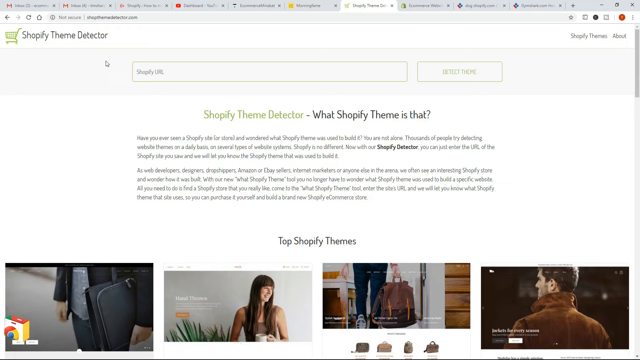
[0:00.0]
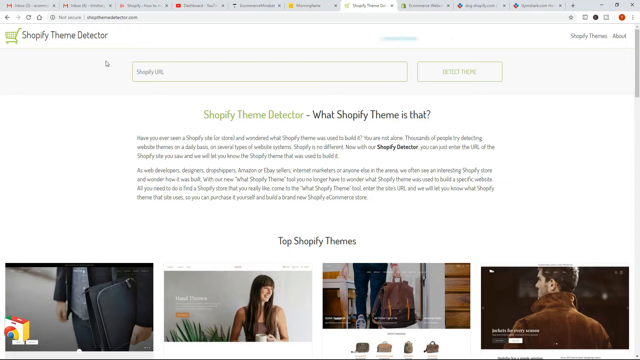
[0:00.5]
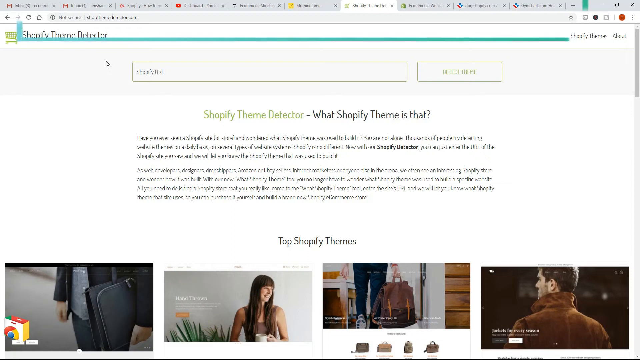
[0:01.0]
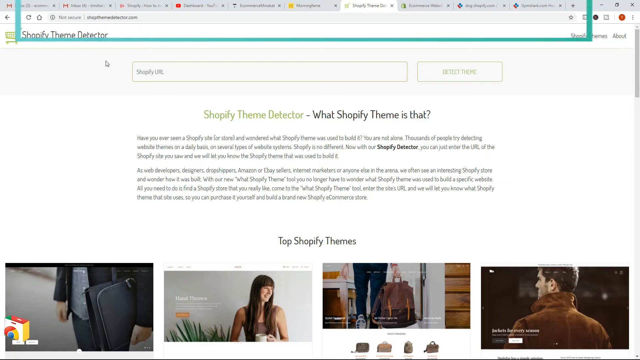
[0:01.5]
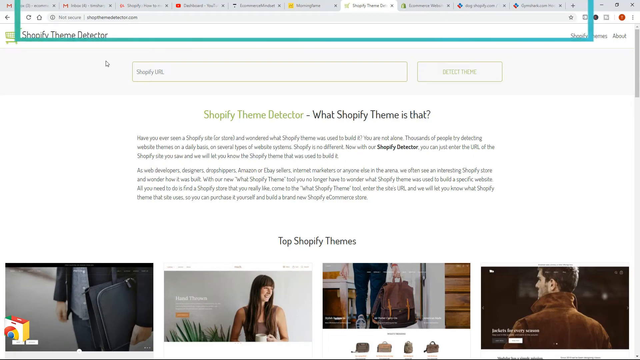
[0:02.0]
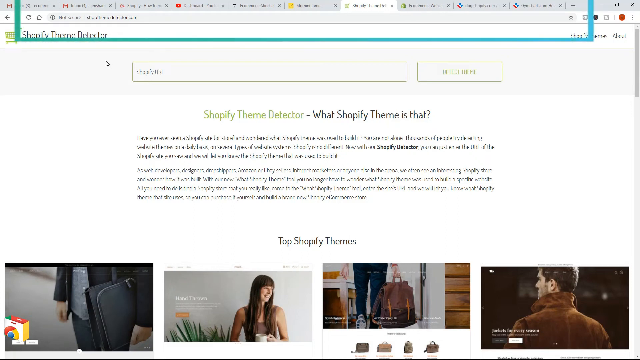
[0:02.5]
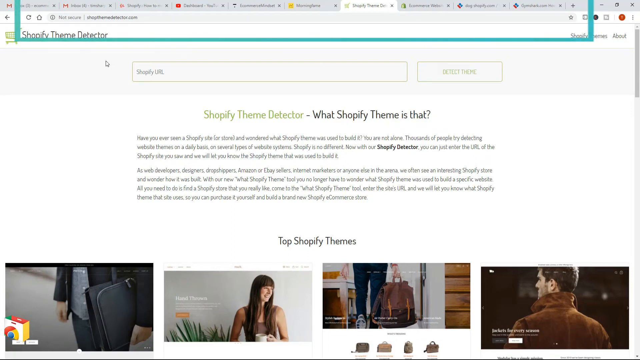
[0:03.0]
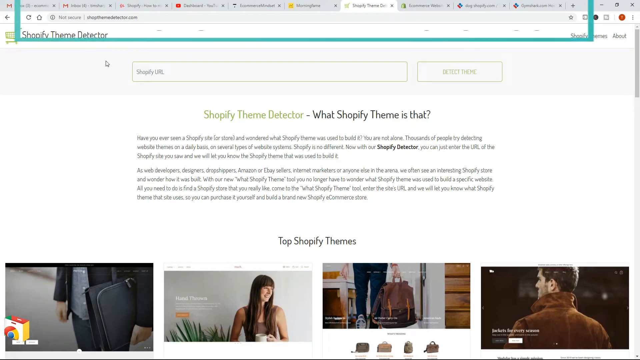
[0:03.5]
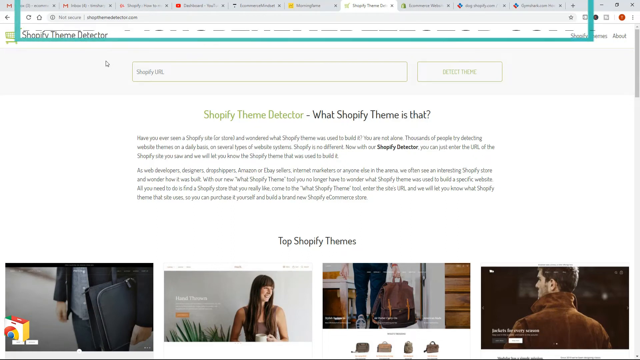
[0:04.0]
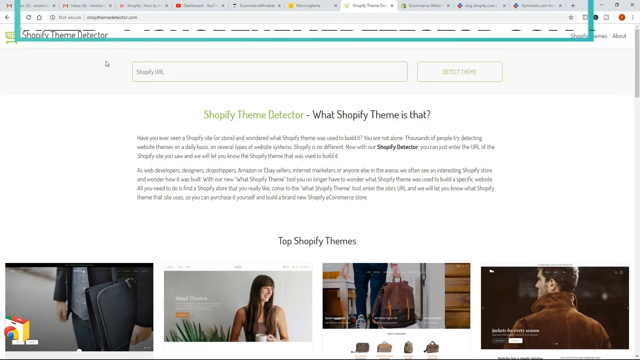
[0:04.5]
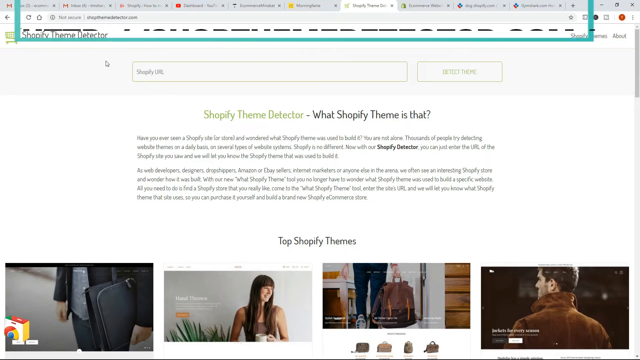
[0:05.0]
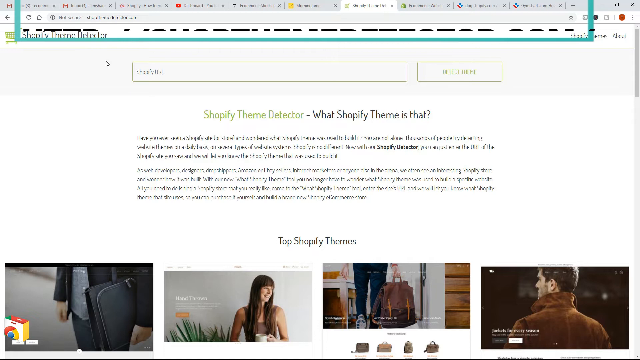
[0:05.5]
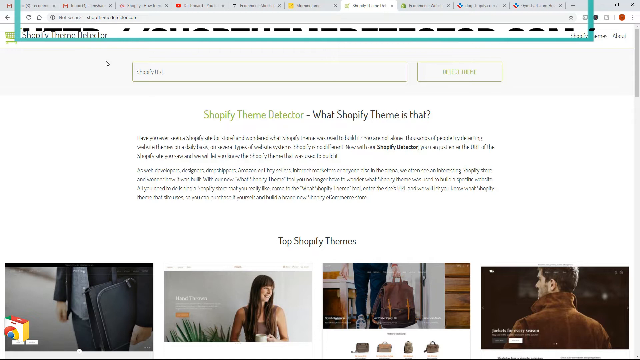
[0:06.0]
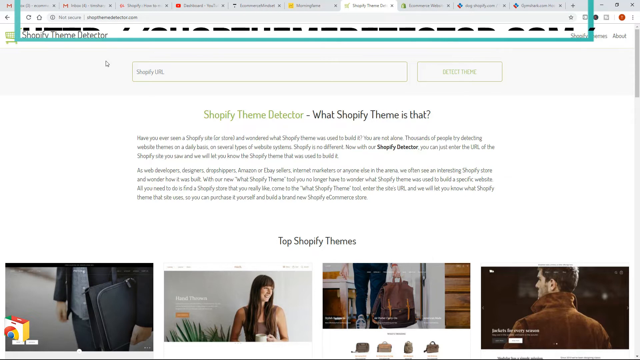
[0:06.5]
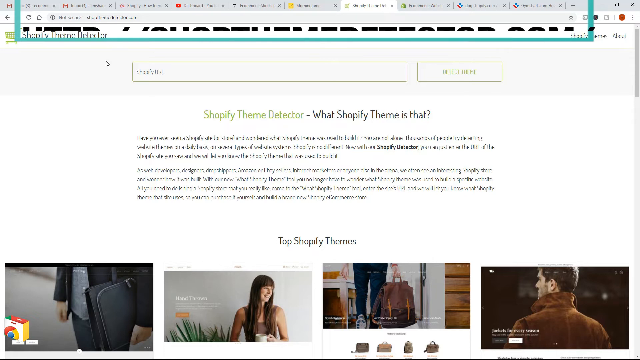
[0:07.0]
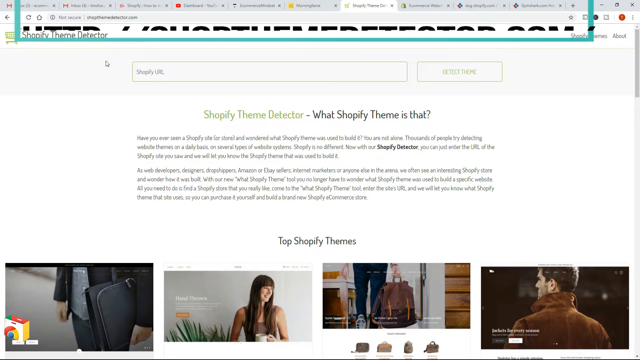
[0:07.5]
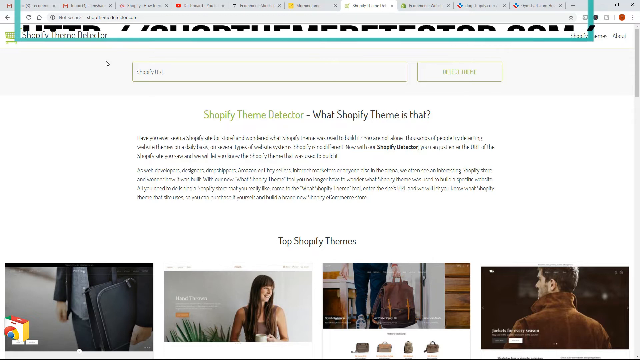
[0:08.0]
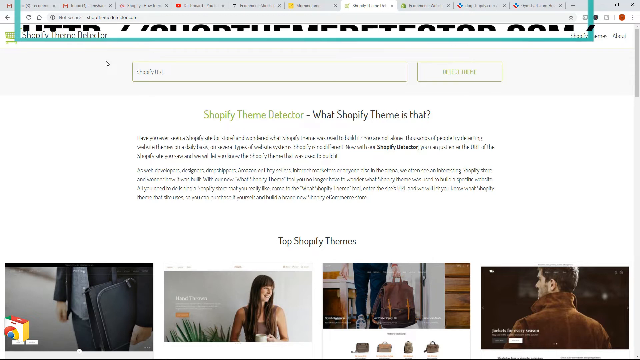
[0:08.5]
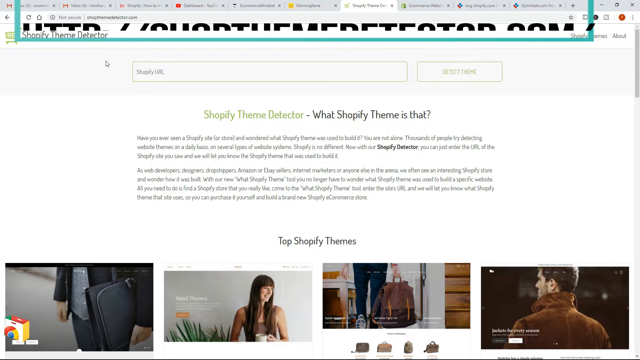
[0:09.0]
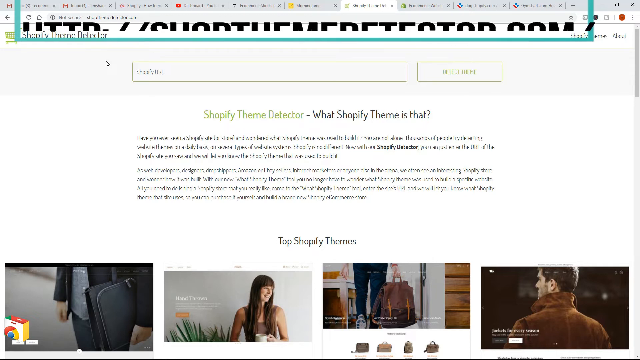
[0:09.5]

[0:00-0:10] A Shopify theme detector is on screen.